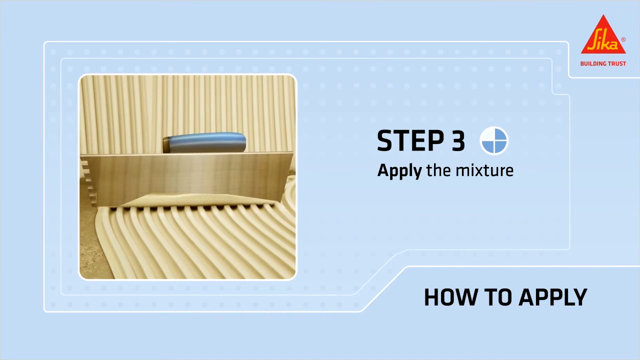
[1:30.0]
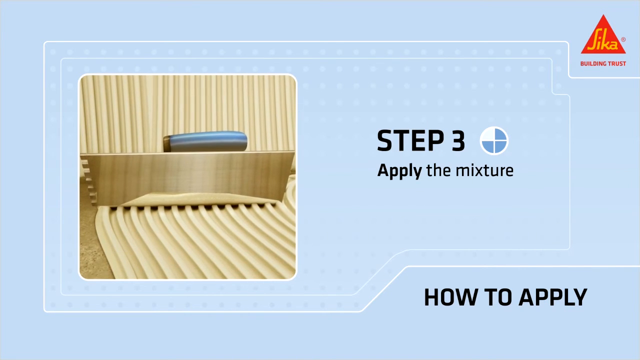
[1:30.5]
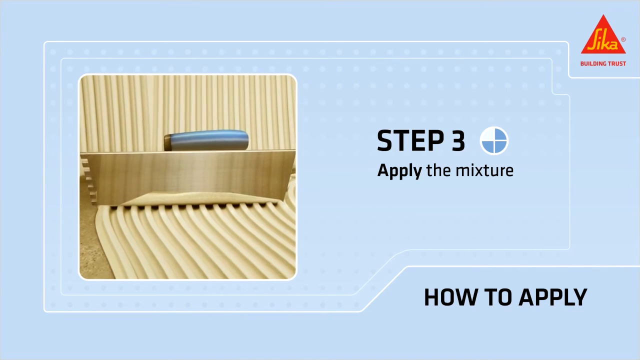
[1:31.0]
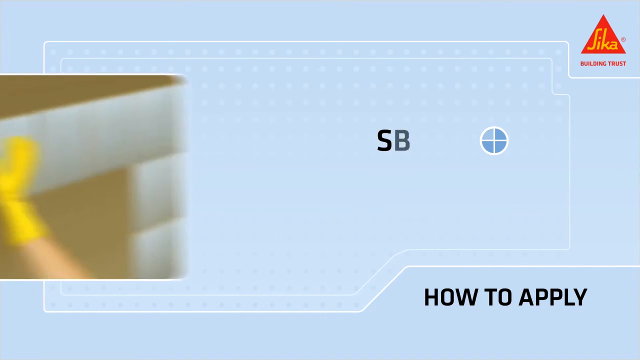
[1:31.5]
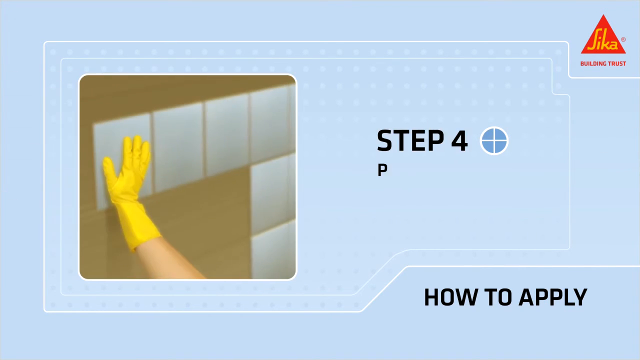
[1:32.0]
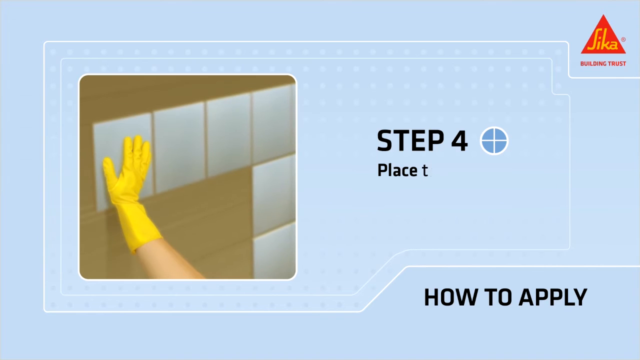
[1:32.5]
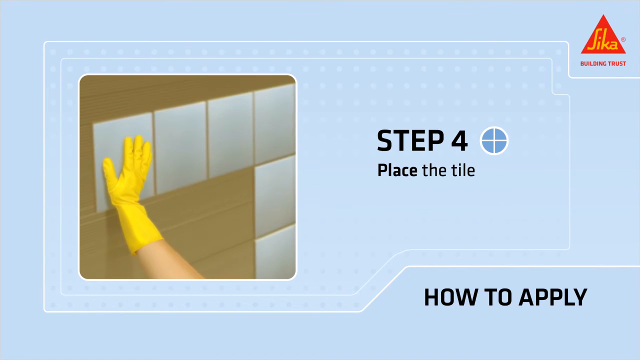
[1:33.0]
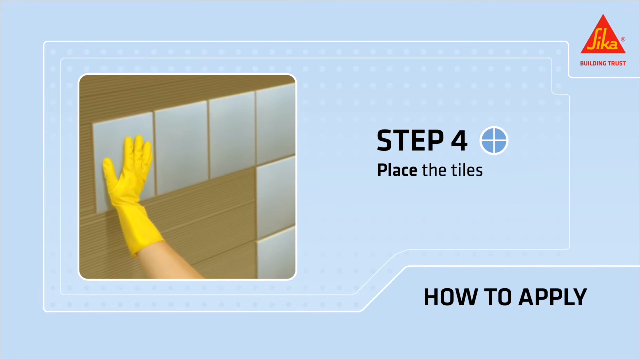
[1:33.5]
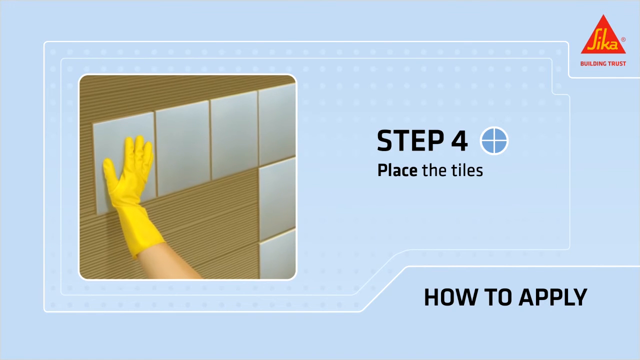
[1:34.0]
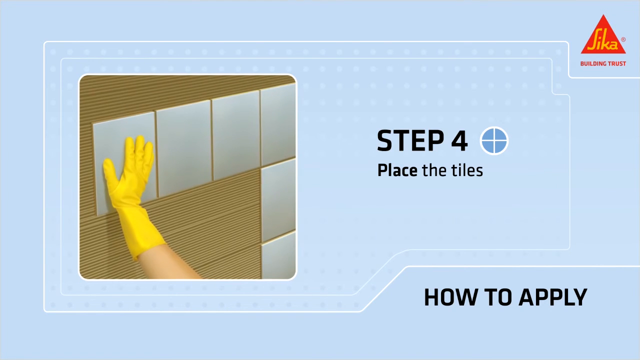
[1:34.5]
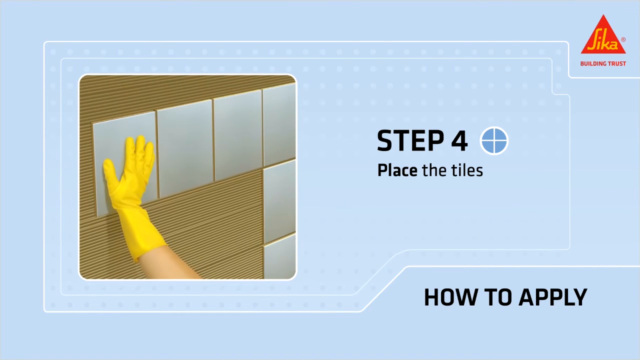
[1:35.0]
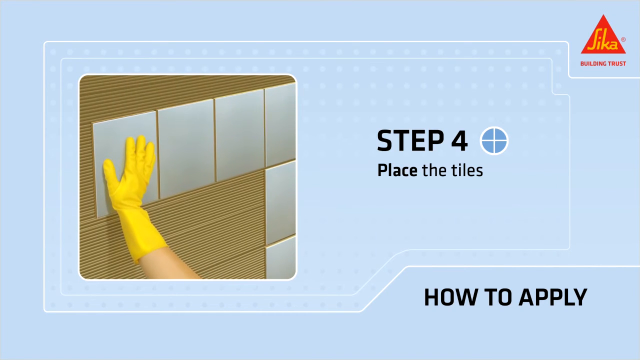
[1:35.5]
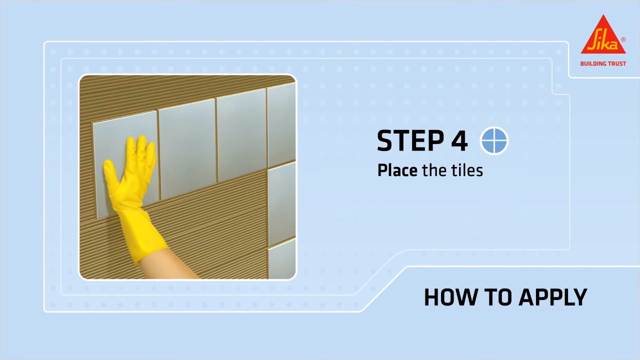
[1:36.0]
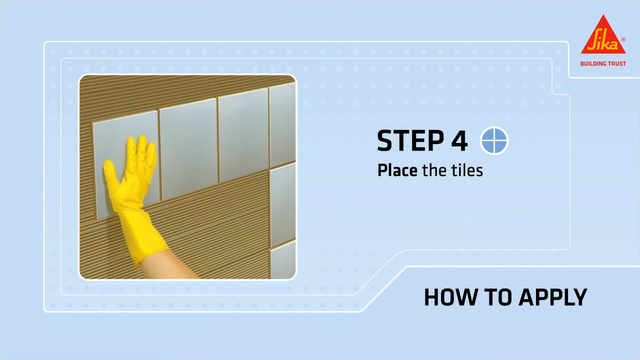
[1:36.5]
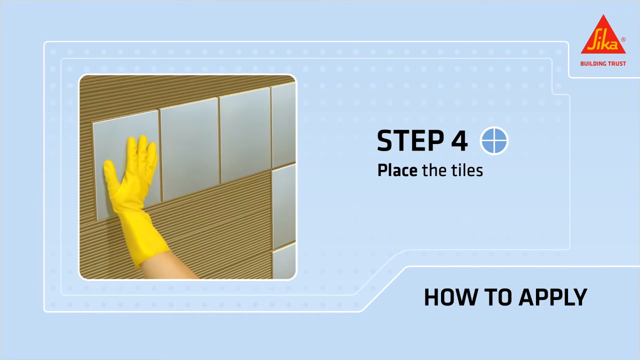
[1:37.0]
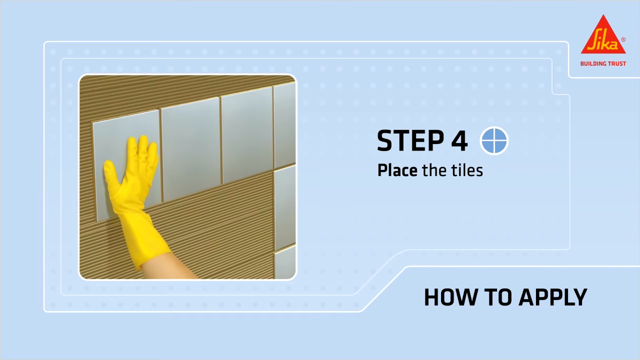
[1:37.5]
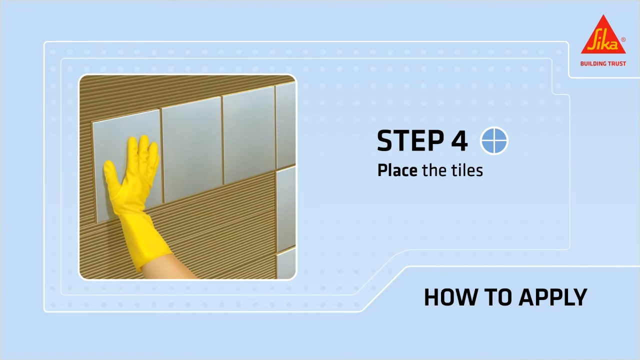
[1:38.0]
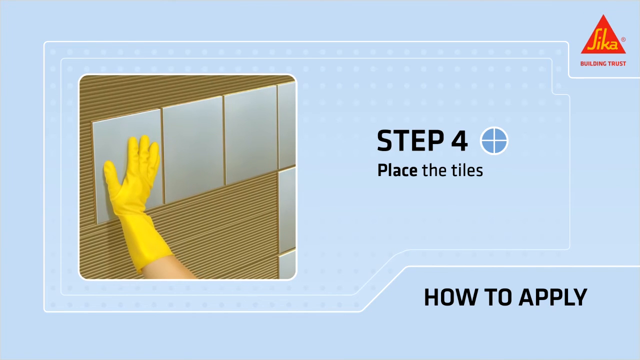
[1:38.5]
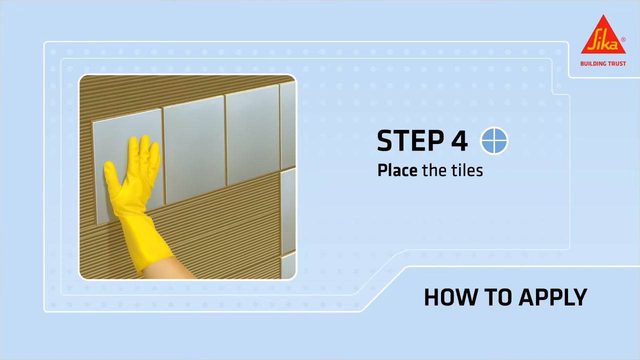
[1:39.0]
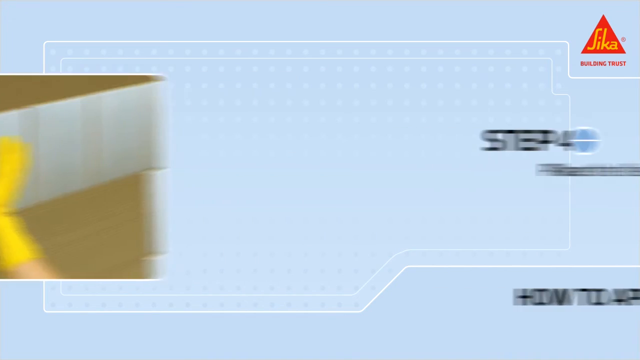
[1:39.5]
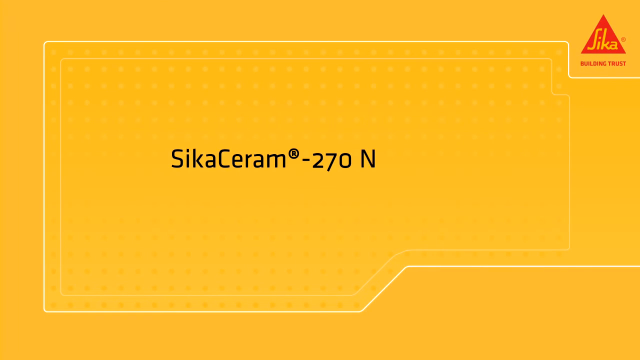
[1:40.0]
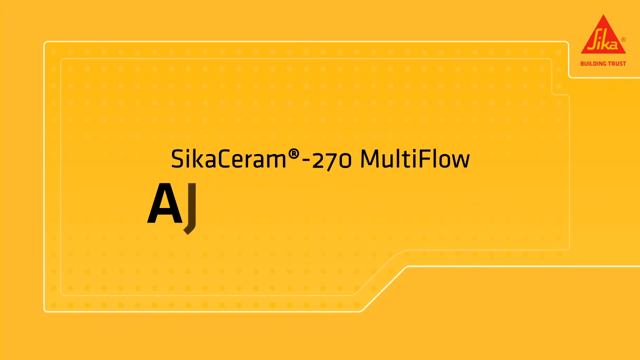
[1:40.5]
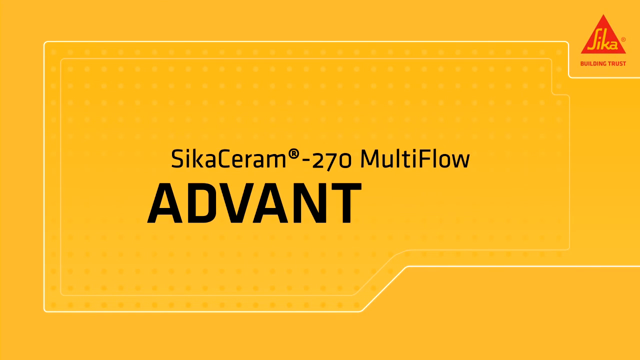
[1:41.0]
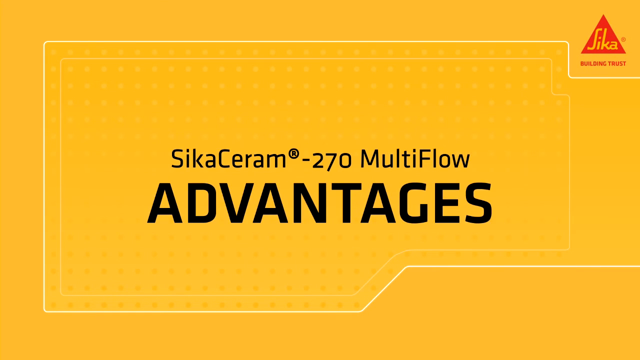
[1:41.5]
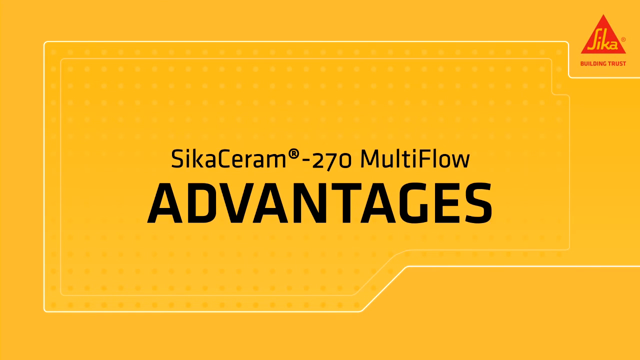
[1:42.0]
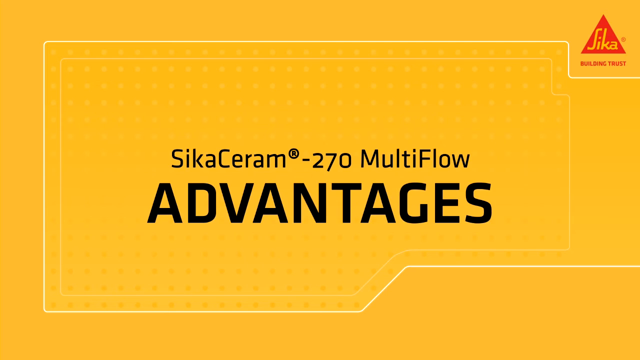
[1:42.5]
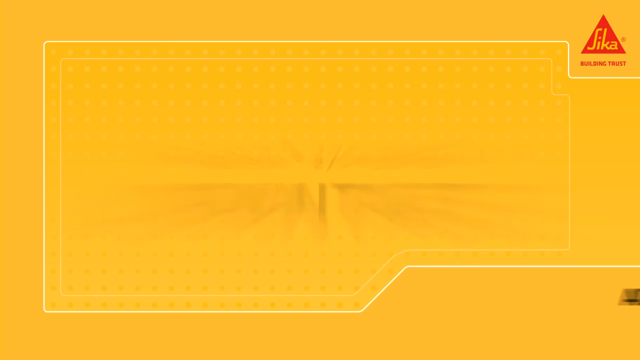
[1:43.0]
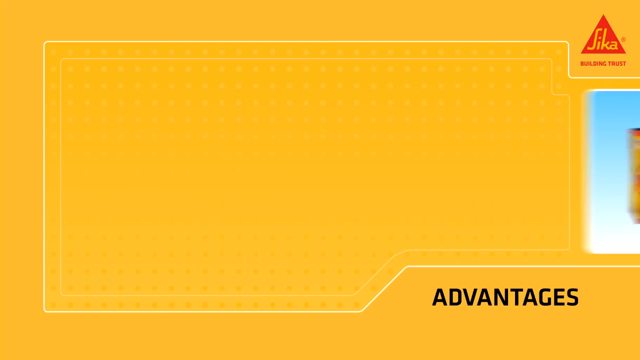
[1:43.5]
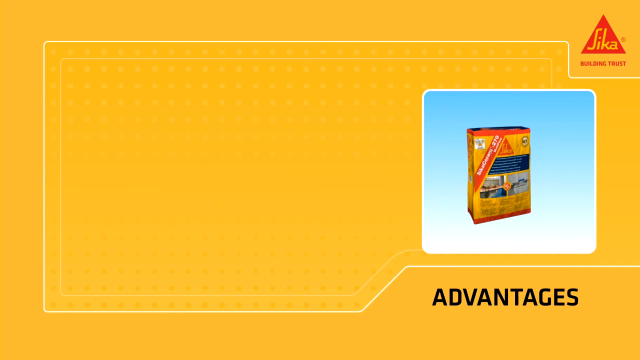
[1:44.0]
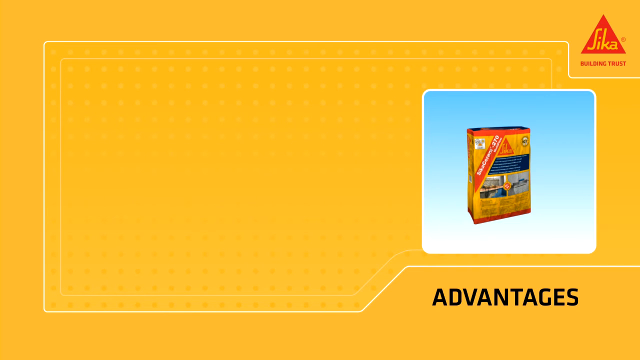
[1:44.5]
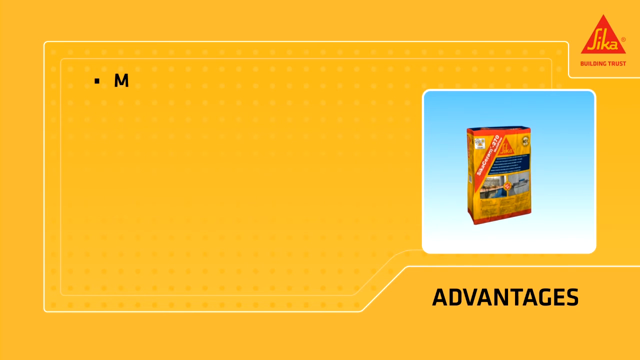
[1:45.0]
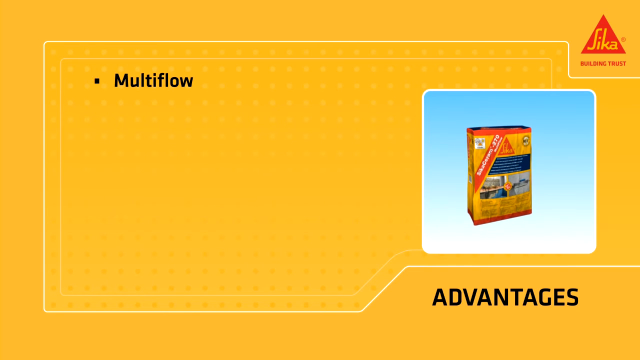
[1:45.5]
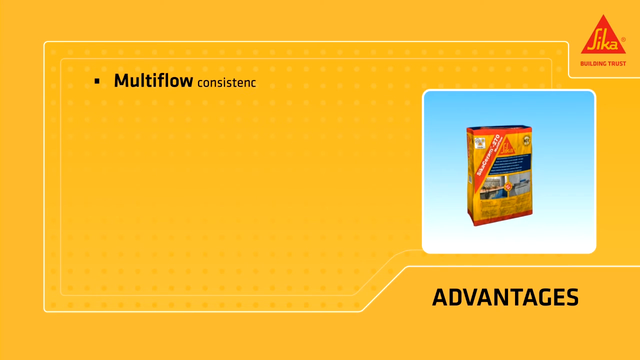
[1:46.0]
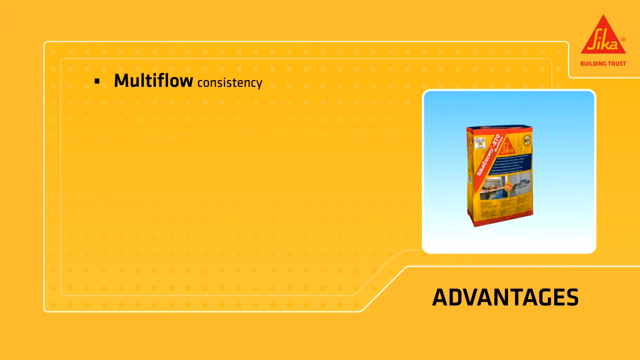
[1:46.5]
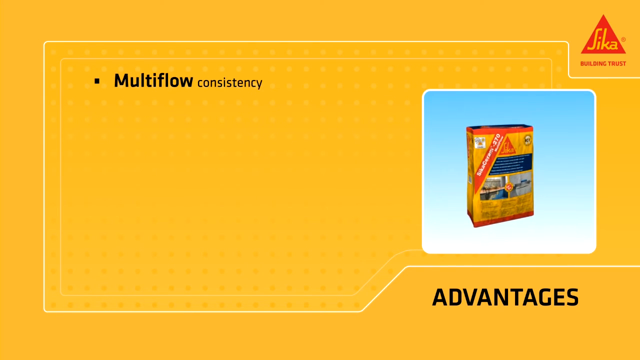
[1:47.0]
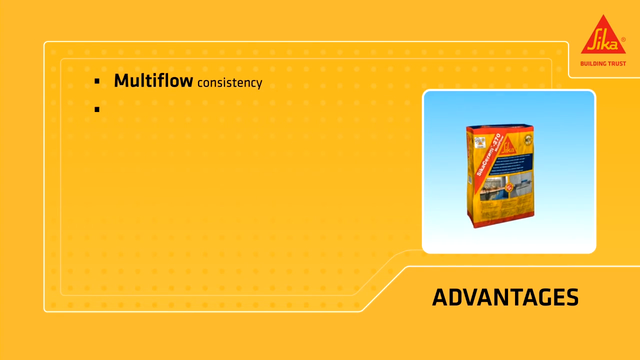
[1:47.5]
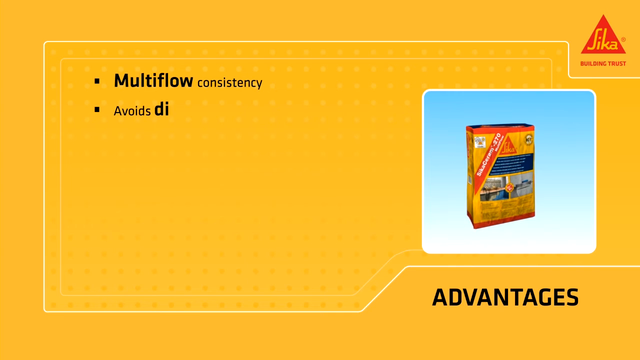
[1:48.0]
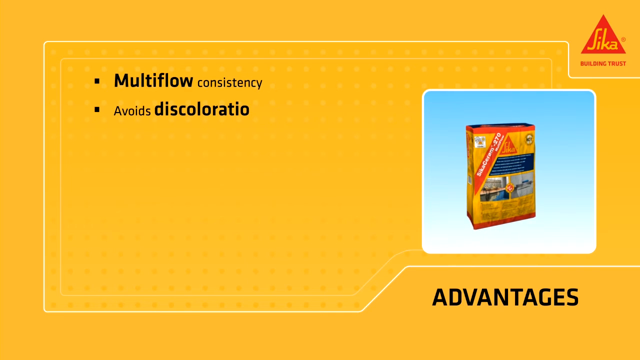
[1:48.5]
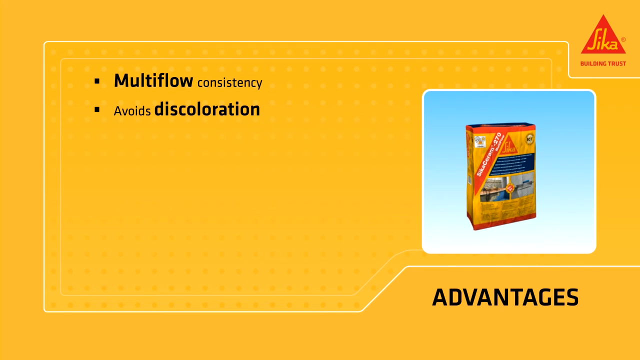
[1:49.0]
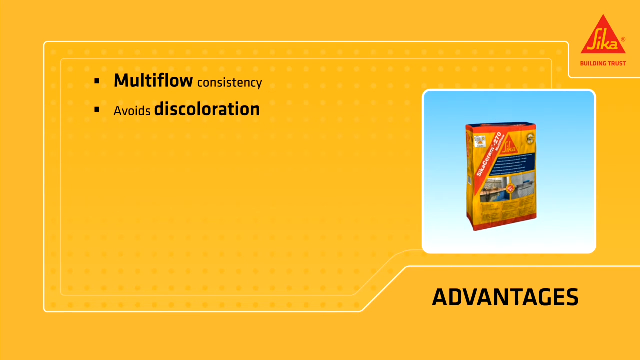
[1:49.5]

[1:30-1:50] Step three, "apply the mixture," shows that someone has been spreading the glue on both the wall and the floor. The trowel has about 12 fairly thick grooves, maybe a third of an inch deep and a third of an inch wide. This still moves away and step four appears, "place the tiles," with a picture of a Caucasian person in a yellow glove pushing a tile onto the wall with their right hand, leaving a small space between the tiles. Next the screen reads "SikaCeram 270 multi-flow advantages," with a bag on the right and a bulleted list starting on the left: the first bullet says "multi-flow consistency" and the second "avoids discoloration."